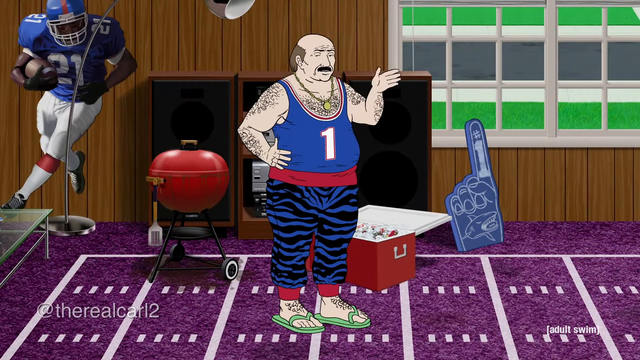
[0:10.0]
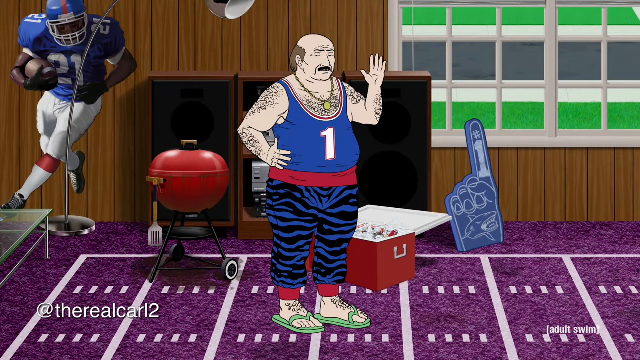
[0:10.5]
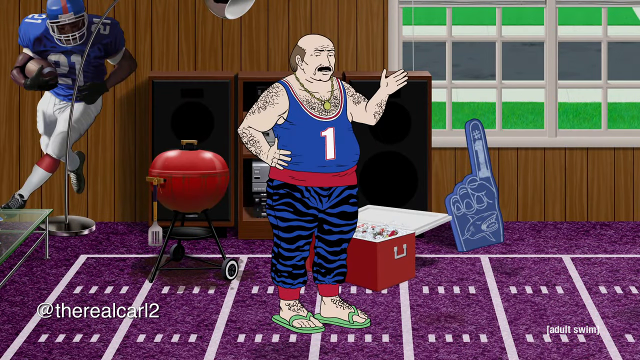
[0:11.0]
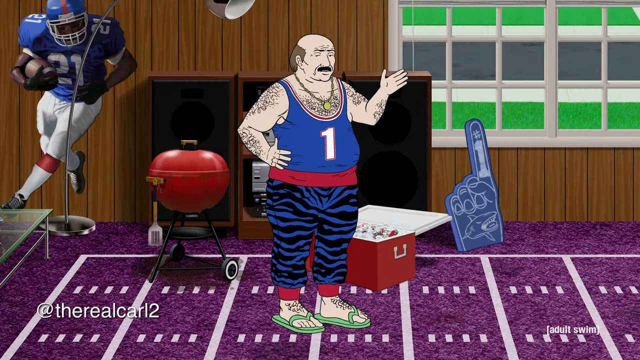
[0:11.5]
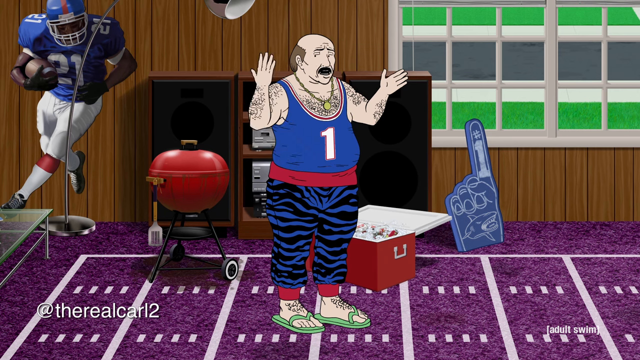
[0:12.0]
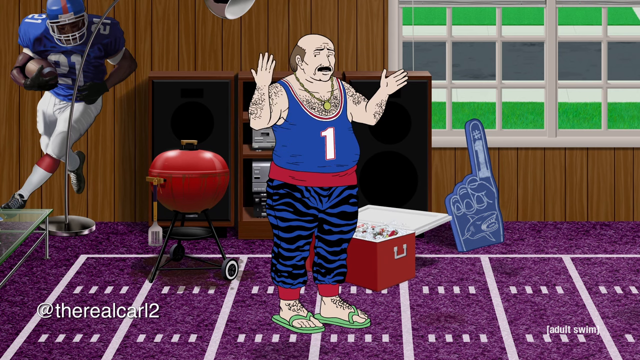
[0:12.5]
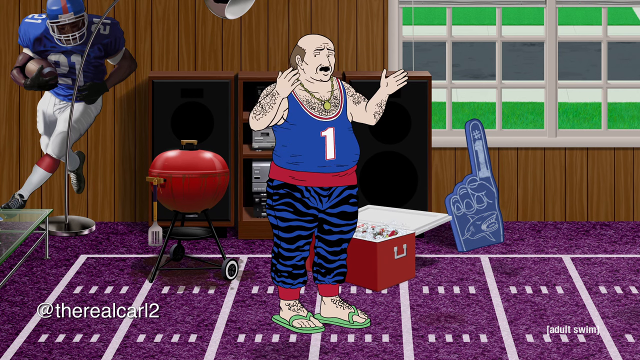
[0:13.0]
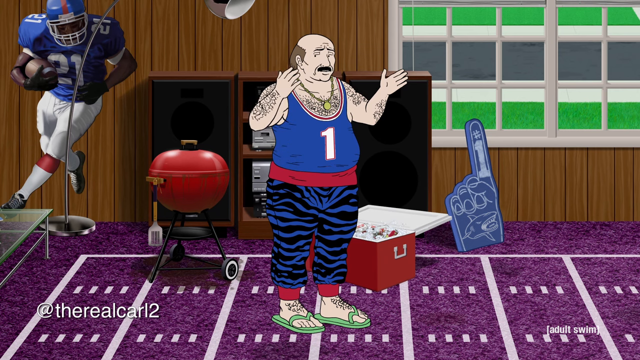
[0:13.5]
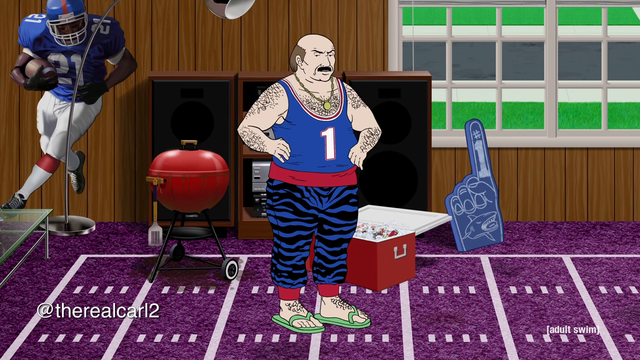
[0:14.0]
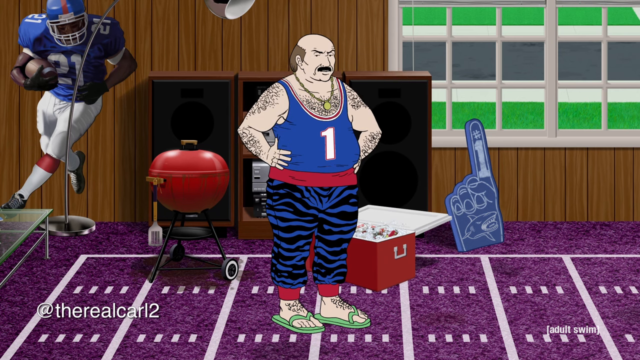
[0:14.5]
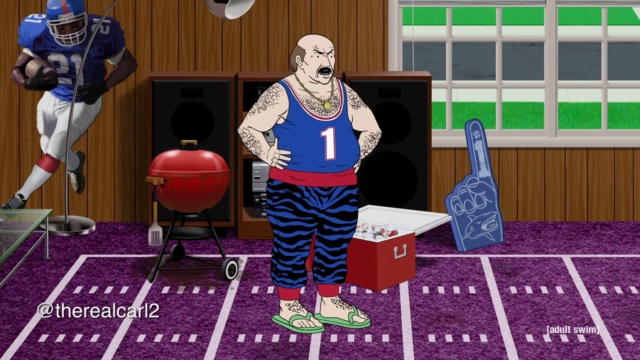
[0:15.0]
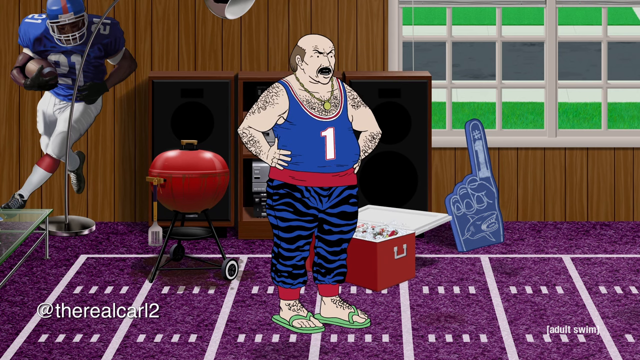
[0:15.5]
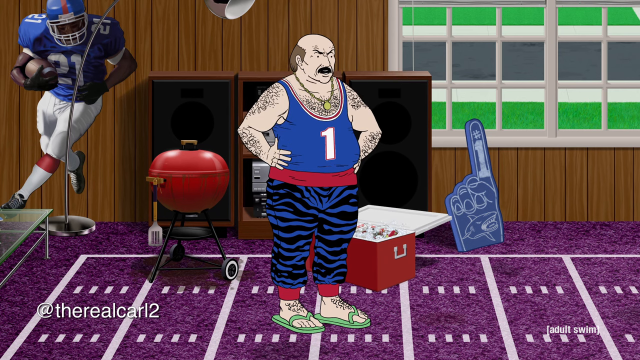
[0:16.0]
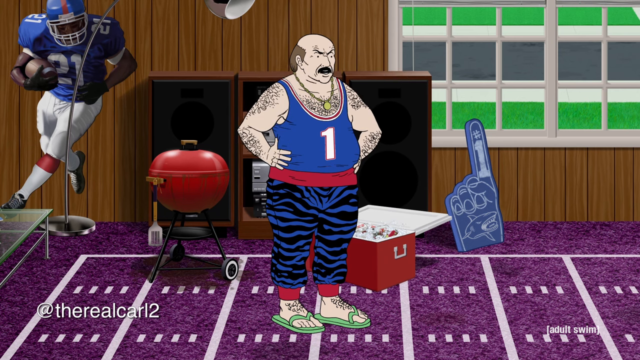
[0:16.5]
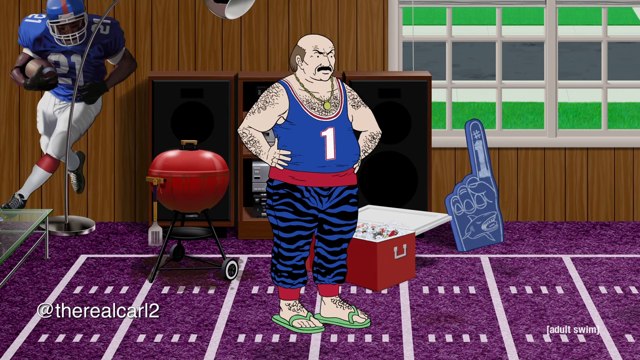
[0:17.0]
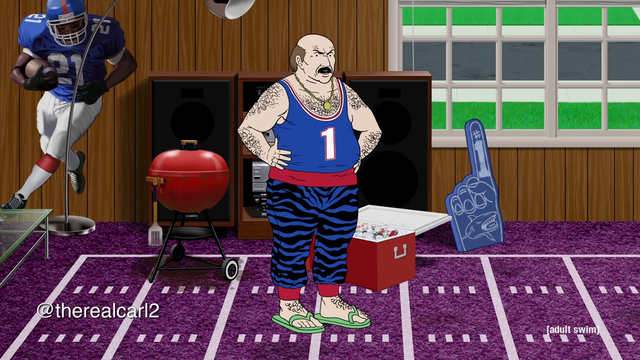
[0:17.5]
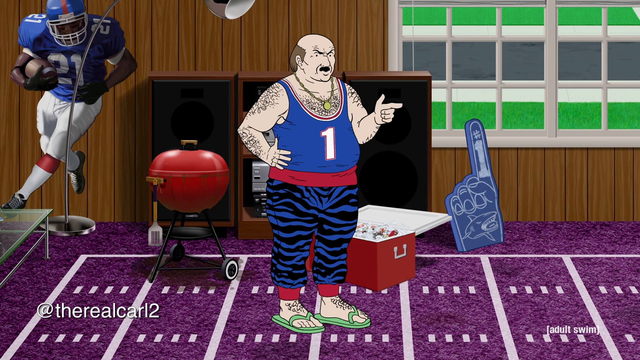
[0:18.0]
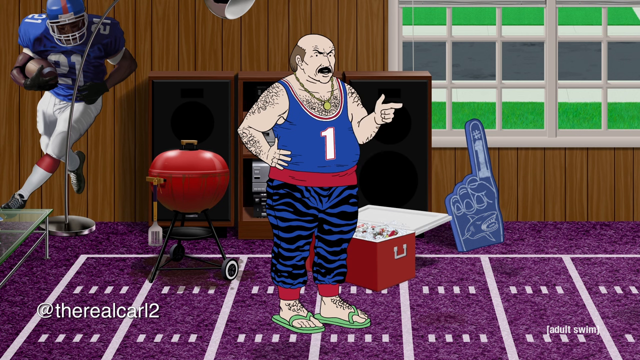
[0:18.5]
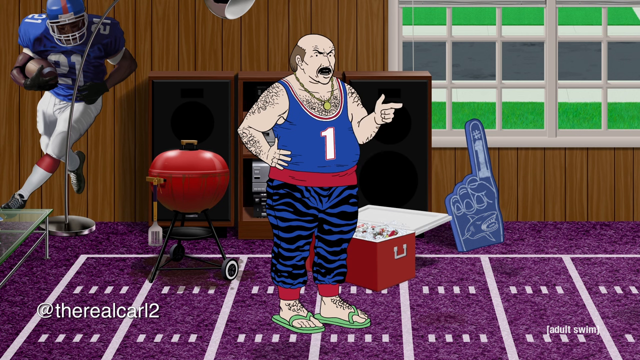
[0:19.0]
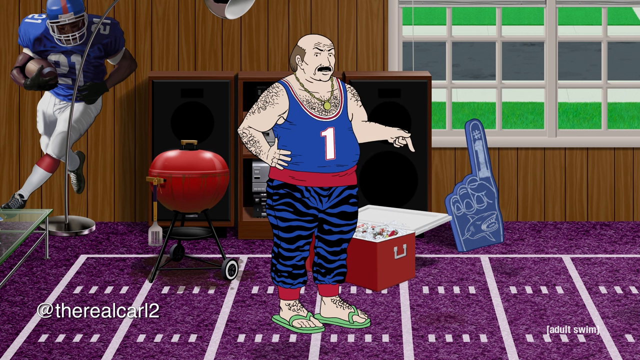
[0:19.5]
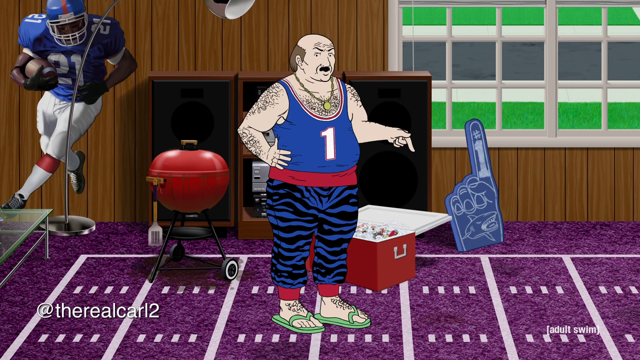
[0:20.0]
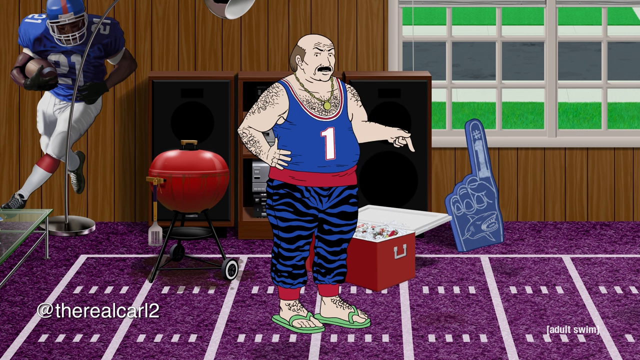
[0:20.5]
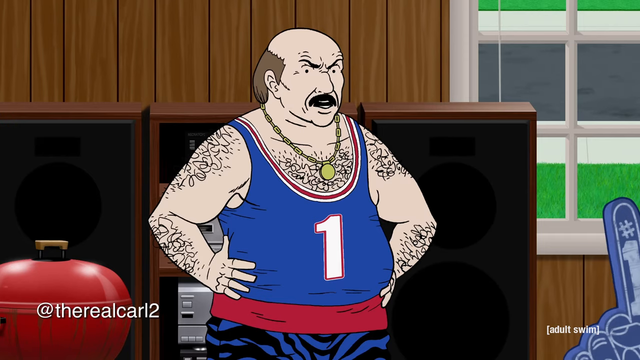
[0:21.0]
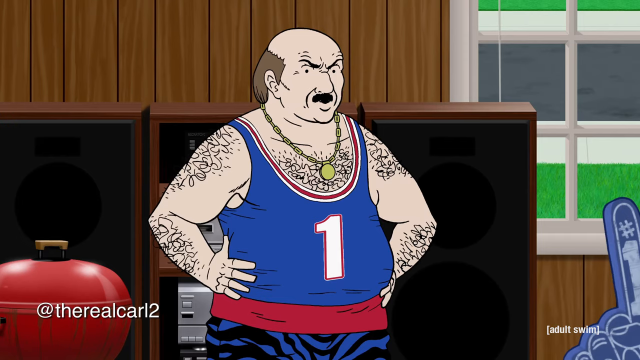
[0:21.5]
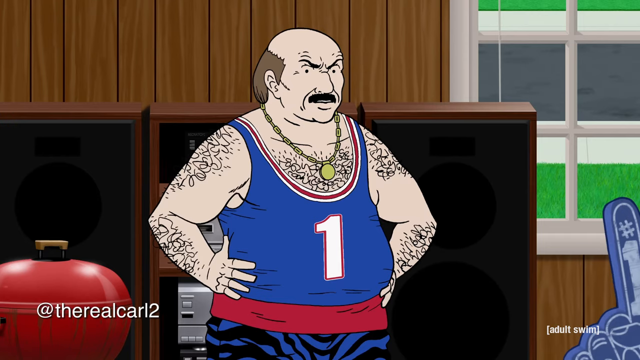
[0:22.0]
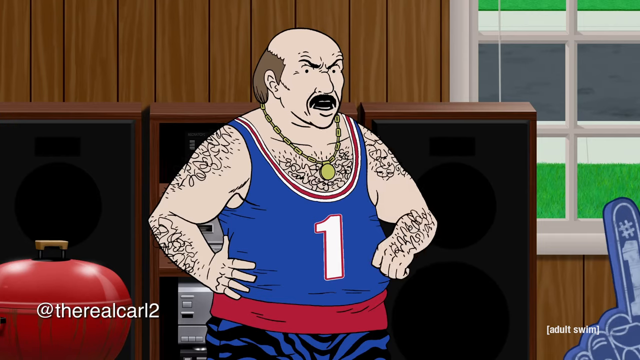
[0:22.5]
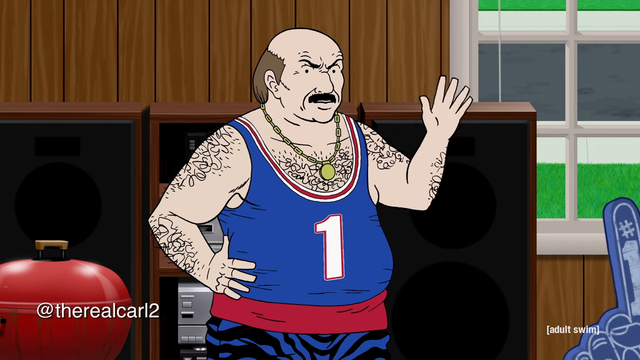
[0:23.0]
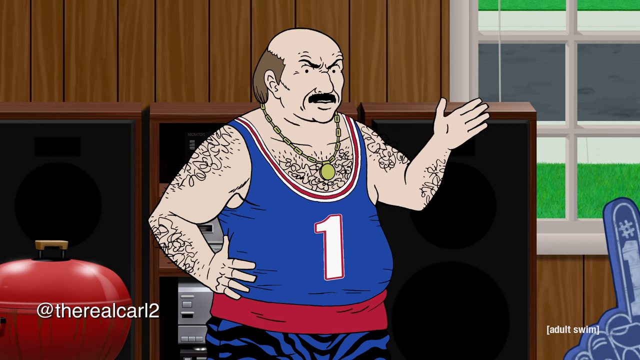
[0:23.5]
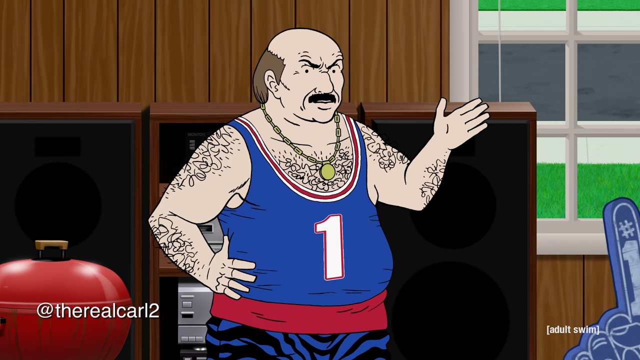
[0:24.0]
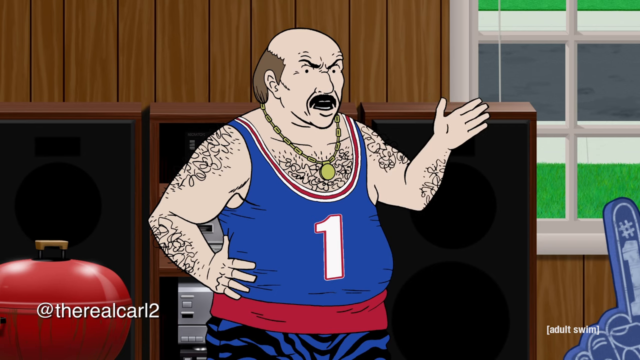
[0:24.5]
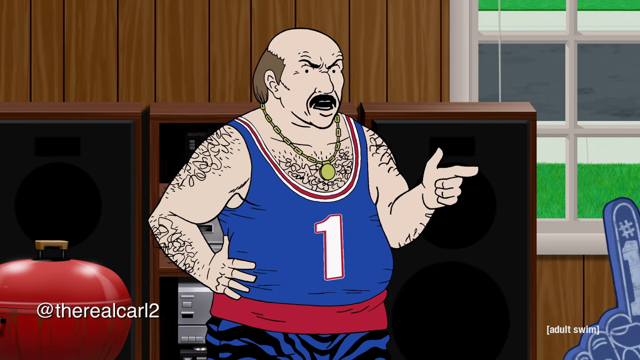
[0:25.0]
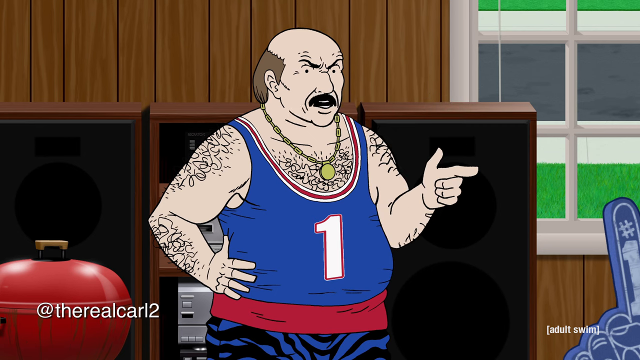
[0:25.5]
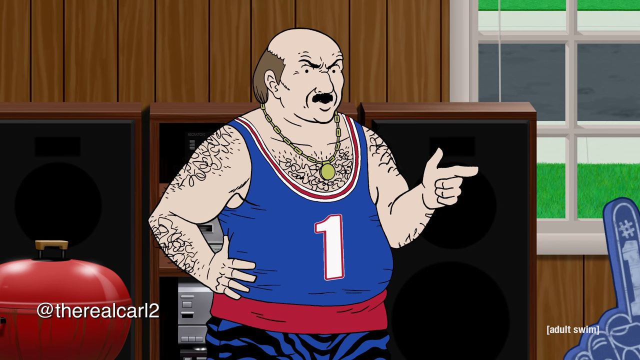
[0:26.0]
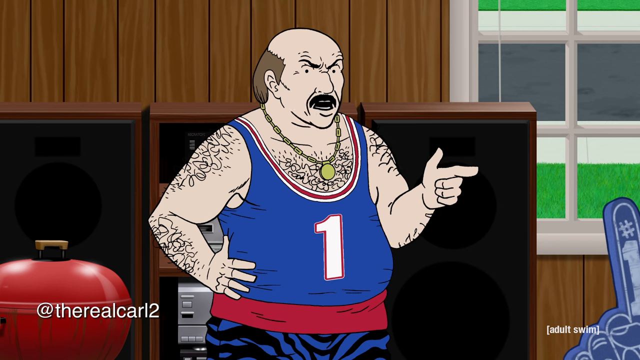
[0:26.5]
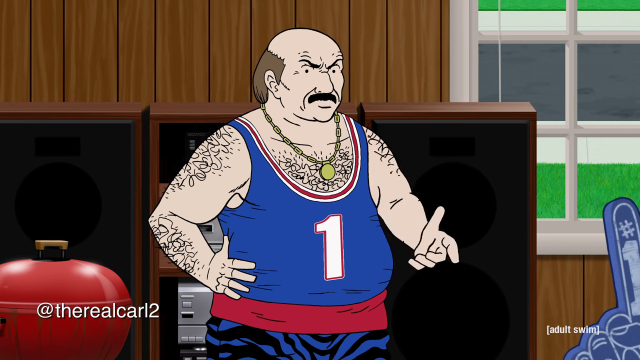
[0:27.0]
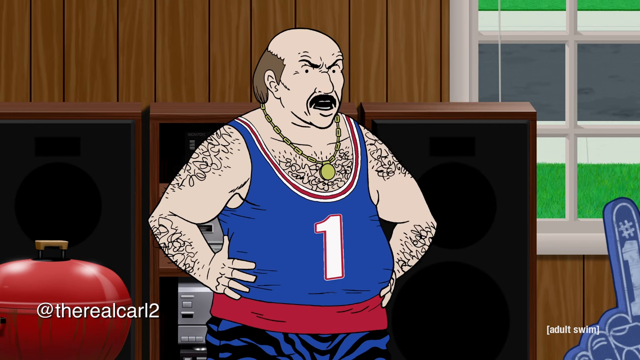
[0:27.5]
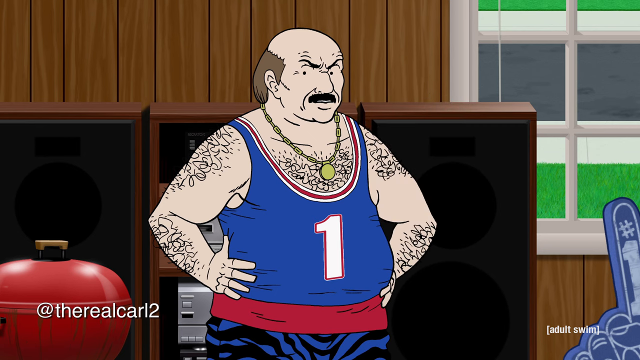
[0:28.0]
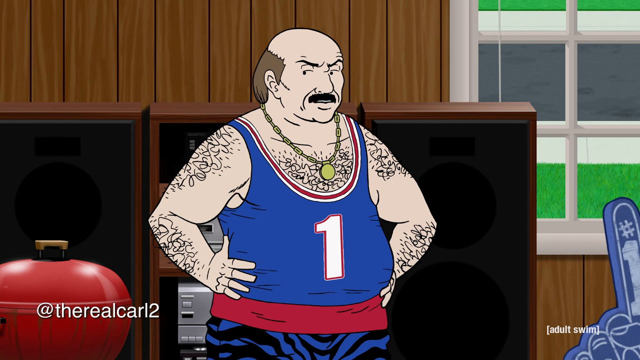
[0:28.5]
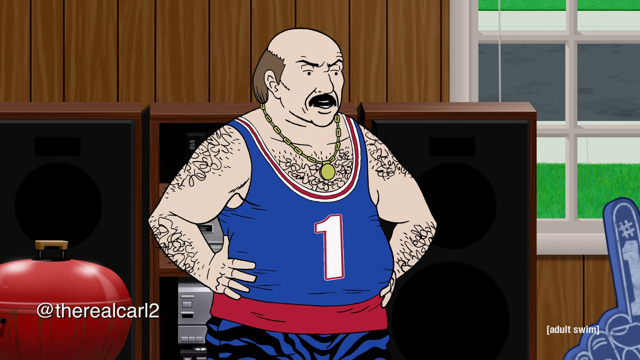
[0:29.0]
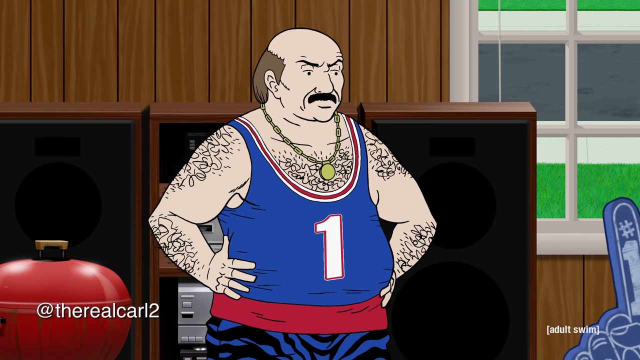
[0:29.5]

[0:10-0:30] A man stands in the middle of a room wearing a number one jersey, with his hand up as if explaining something. He wears blue zebra-striped pants and green flip-flops, is very hairy and slightly overweight, and wears jewelry. The floor is decorated like a bright purple football field, and a barbecue grill is in the back.